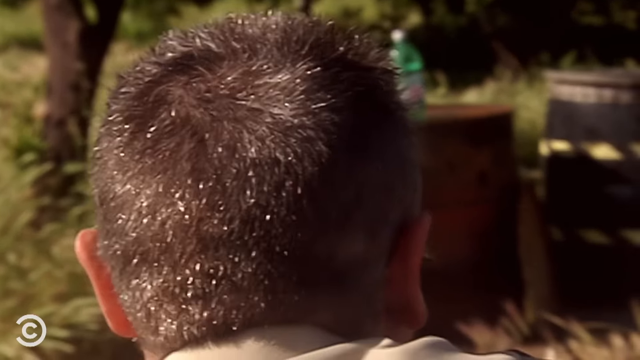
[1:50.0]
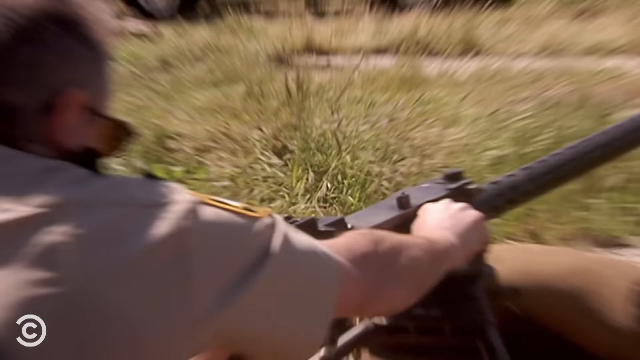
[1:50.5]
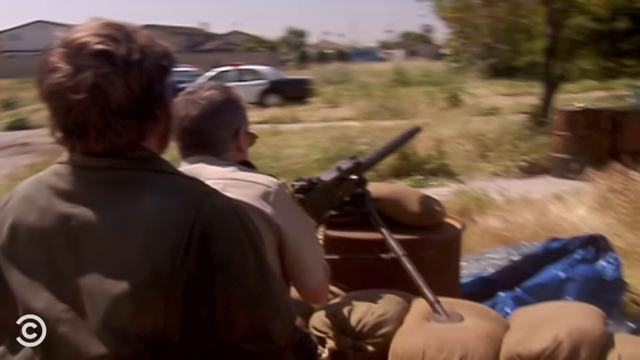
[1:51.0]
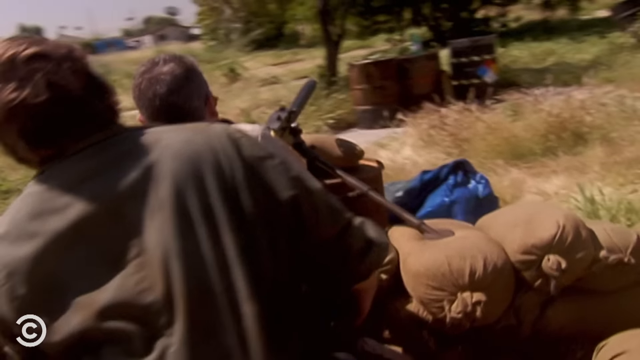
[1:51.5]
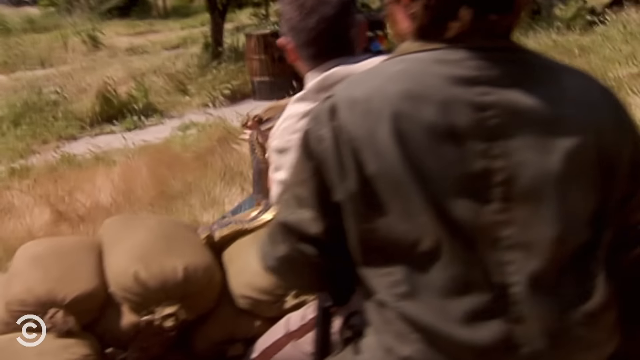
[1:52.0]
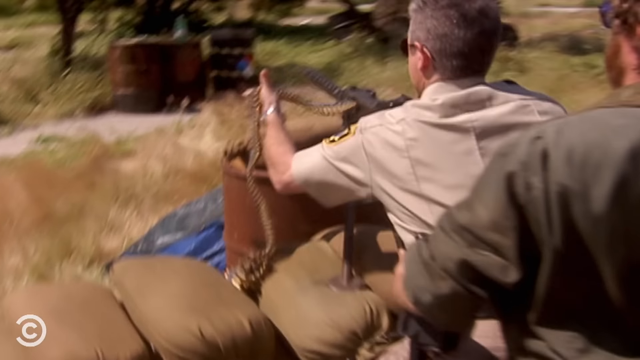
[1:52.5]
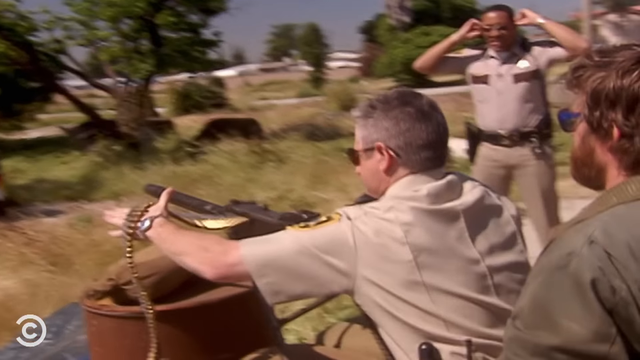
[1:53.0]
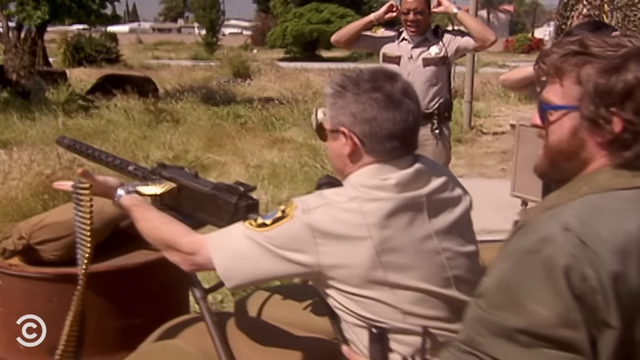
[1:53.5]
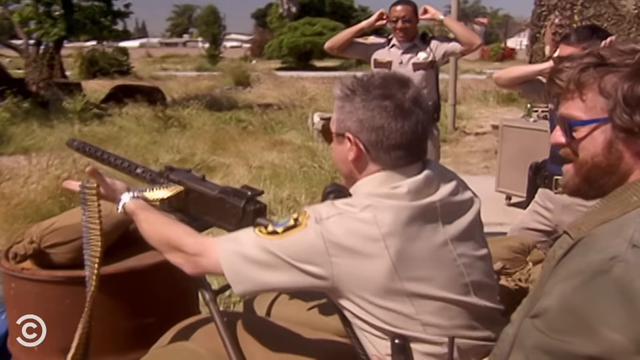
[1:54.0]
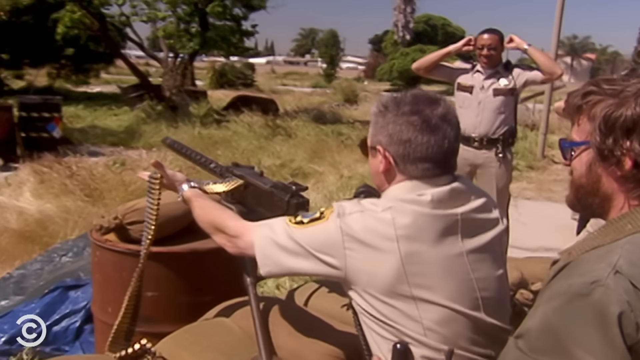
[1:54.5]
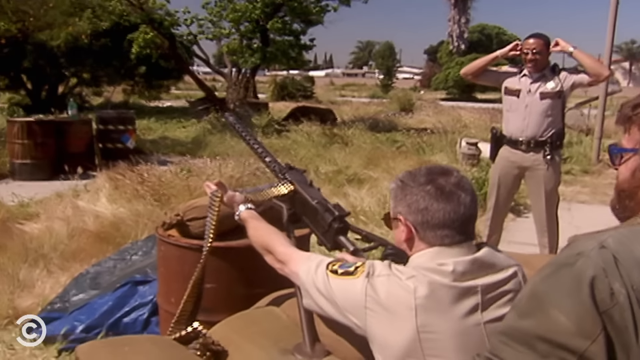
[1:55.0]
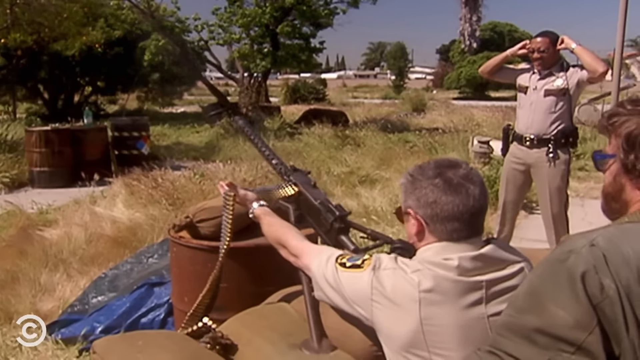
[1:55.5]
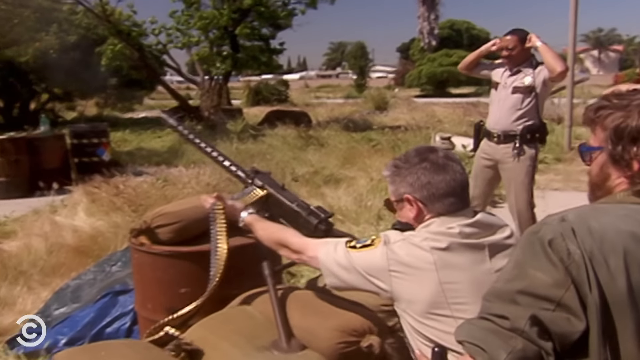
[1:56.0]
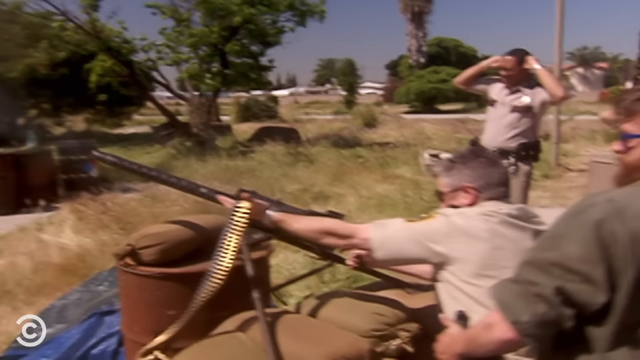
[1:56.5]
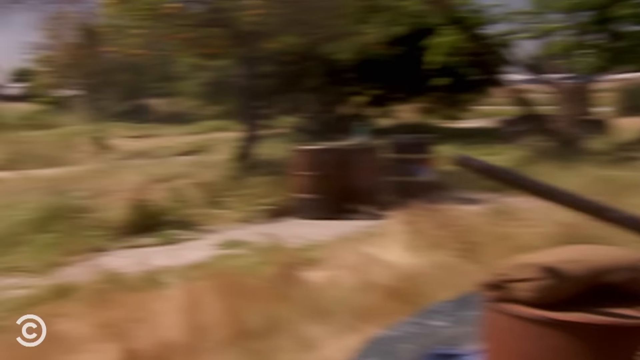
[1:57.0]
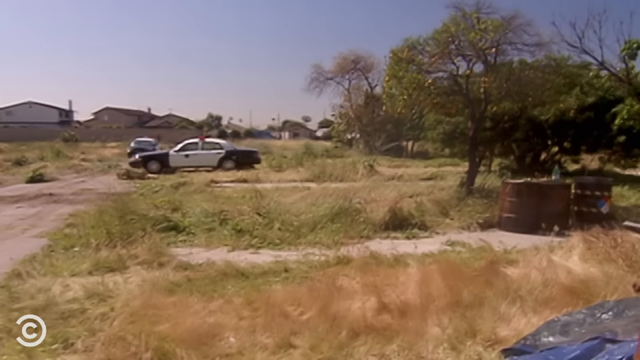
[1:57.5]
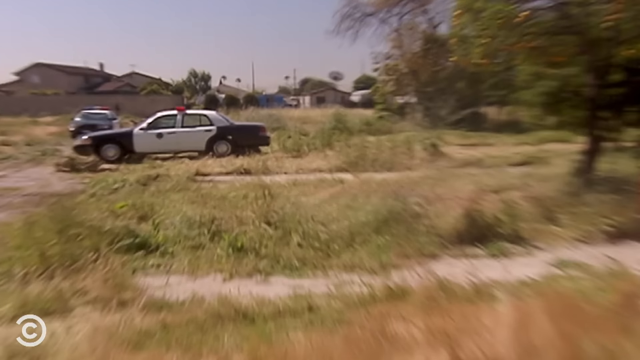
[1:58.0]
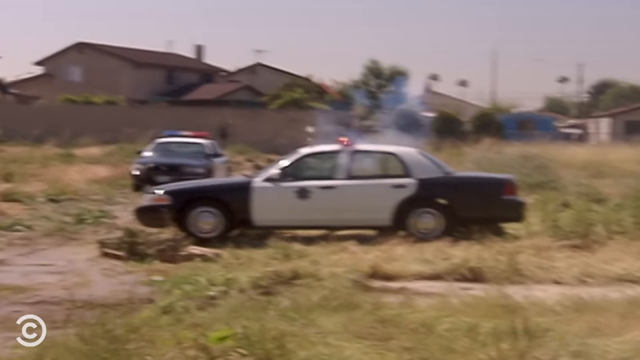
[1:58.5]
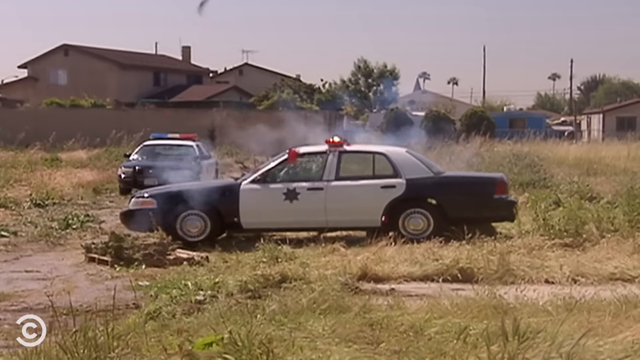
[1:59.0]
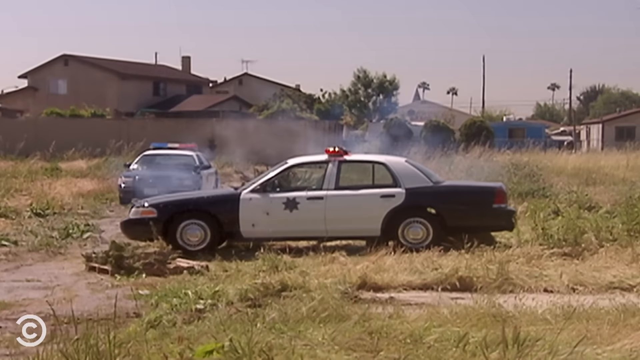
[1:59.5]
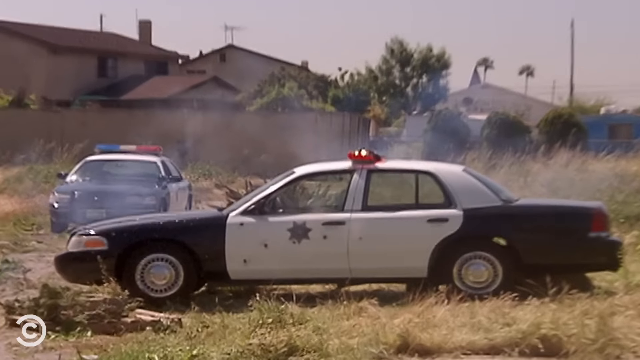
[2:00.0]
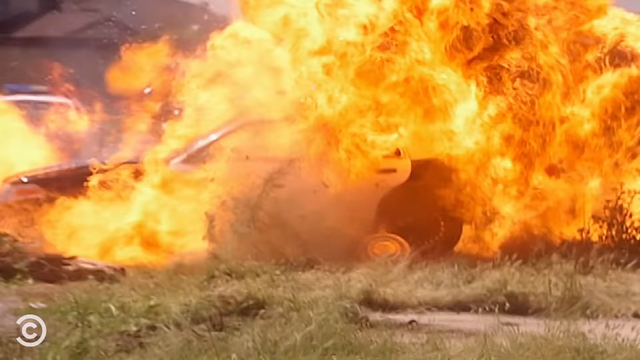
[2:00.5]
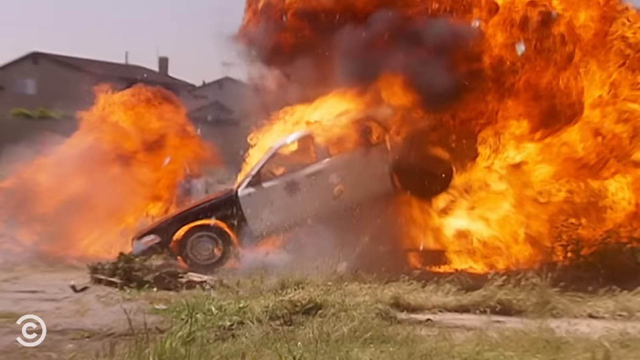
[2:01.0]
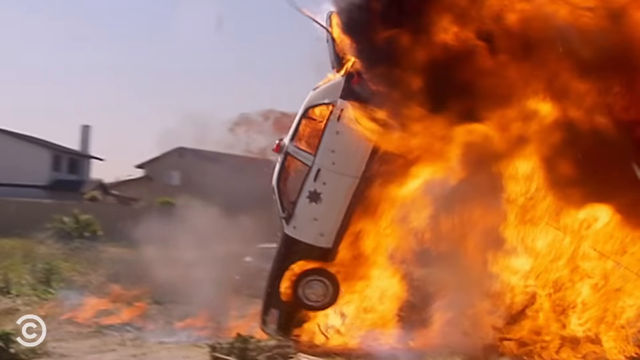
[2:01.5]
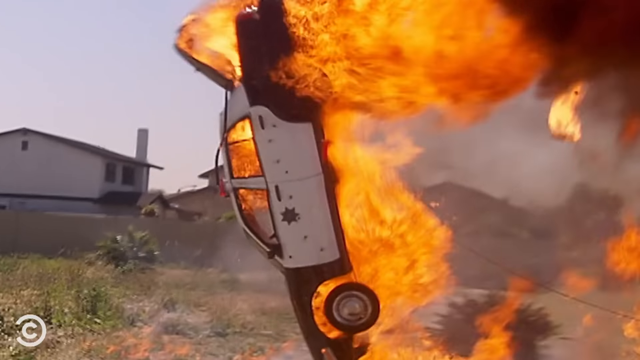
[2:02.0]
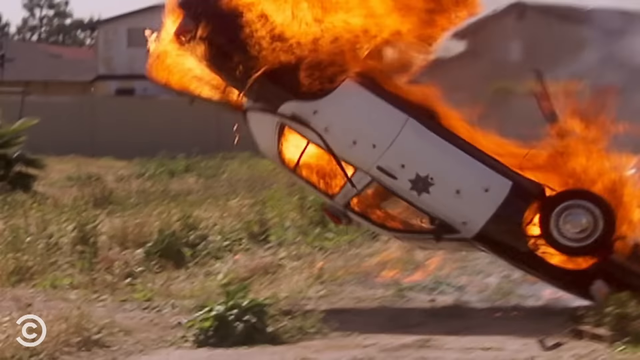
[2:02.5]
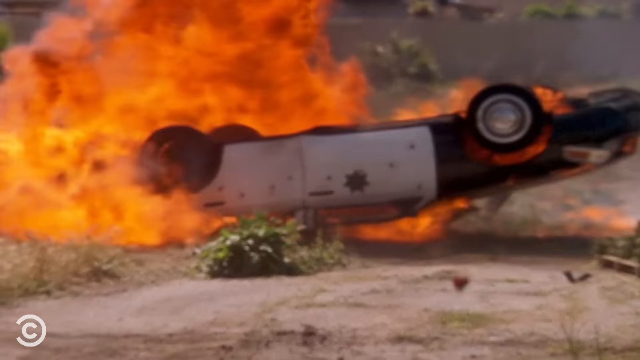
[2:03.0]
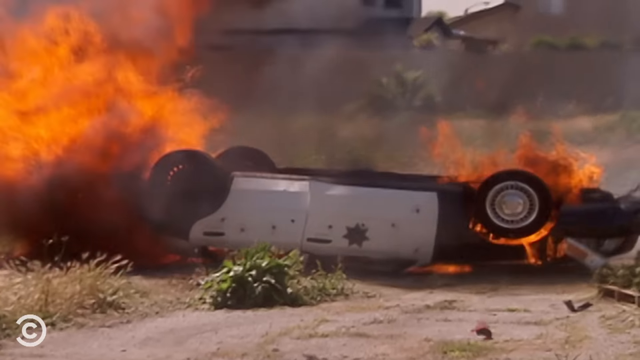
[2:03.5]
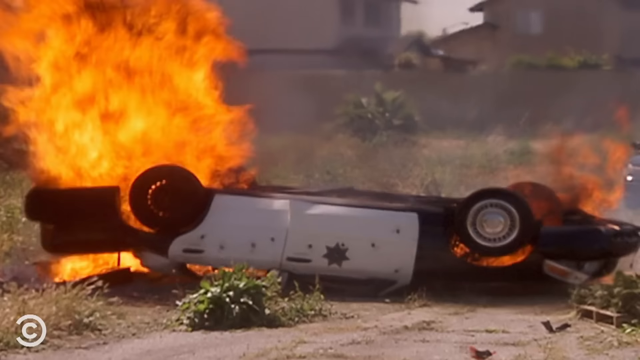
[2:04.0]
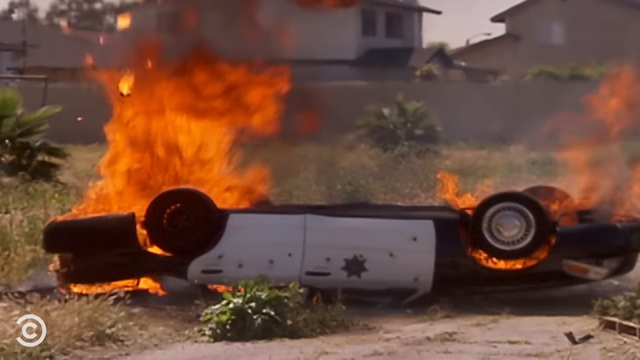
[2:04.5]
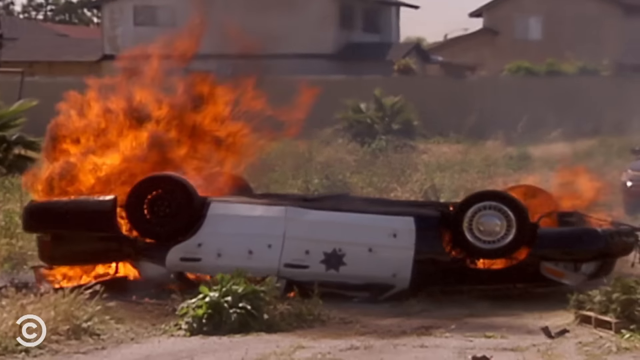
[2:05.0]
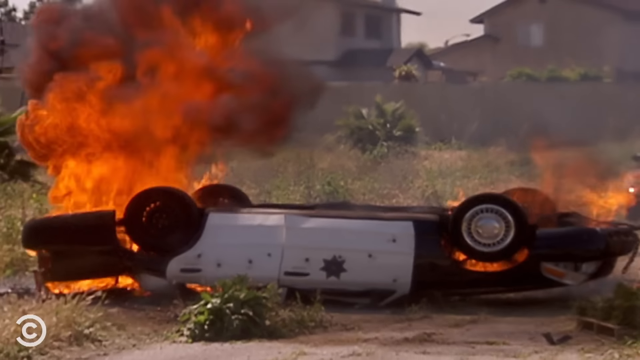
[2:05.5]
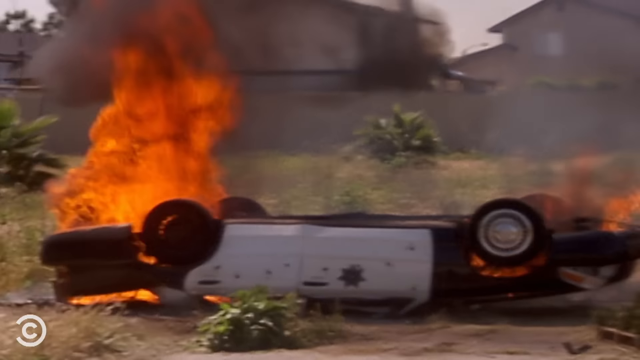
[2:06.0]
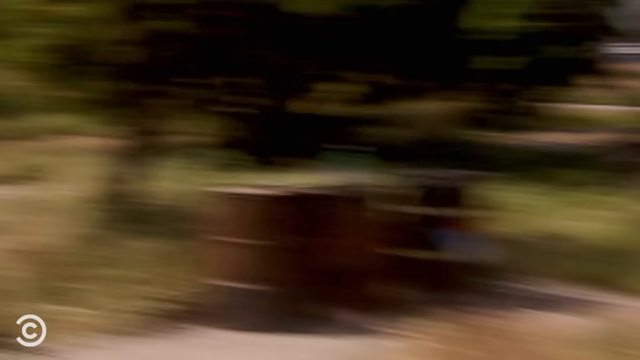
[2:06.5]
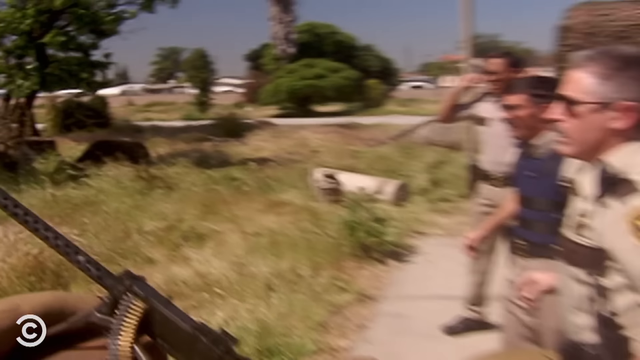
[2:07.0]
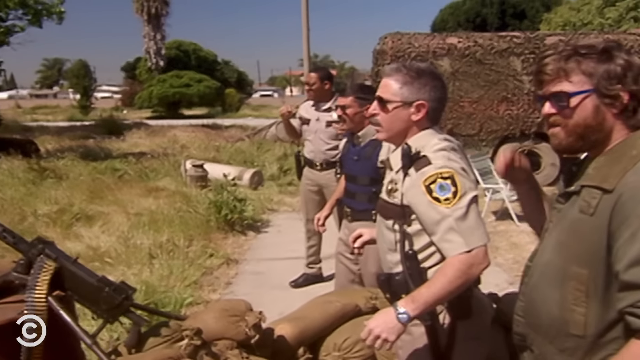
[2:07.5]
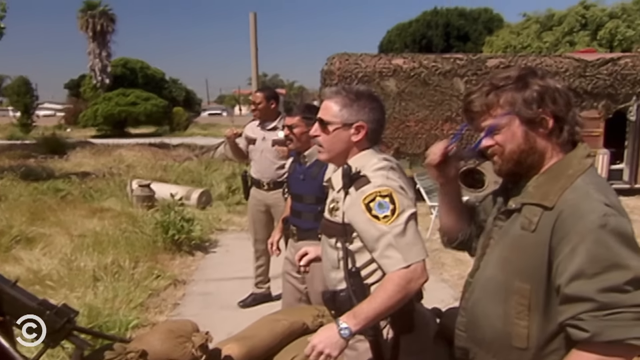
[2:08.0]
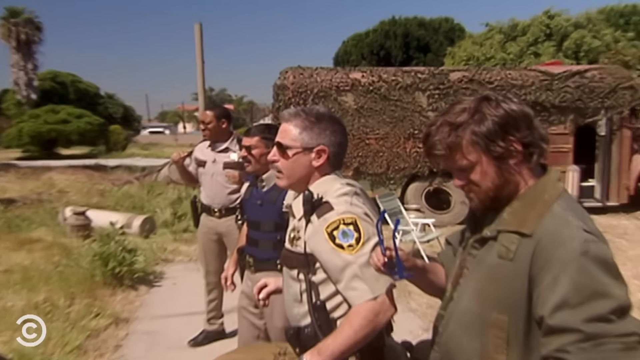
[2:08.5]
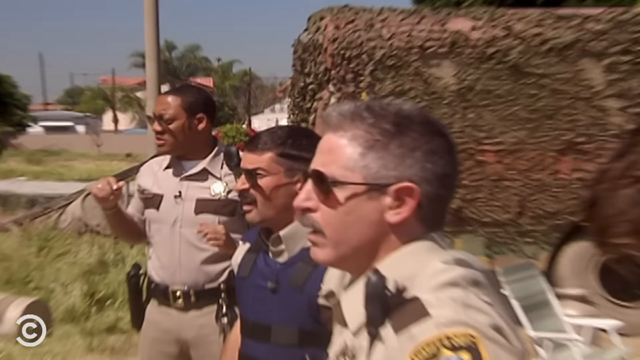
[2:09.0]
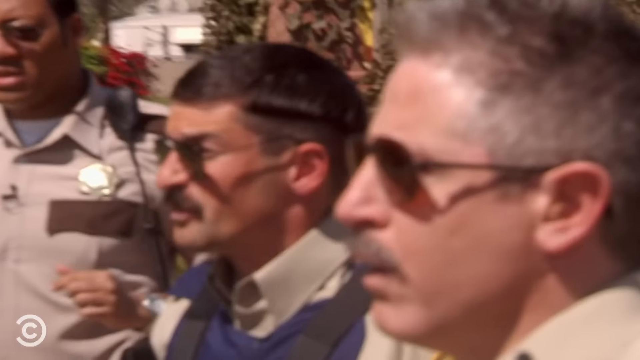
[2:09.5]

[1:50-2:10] One of the cops tries out the machine gun while the guy in the jumpsuit almost guides him physically, with his hands on him, like someone guiding a golf putt. The cop starts shooting and hits one of the cop cars in the background, which explodes. The shot pans to some of the cops reacting. While the shooting happens, a couple of the cops stand in the background with their fingers on their ears. Afterward, the cop in the blue vest says something. The guy in the jumpsuit just stands there watching, then takes his sunglasses off and cleans them on his jumpsuit.